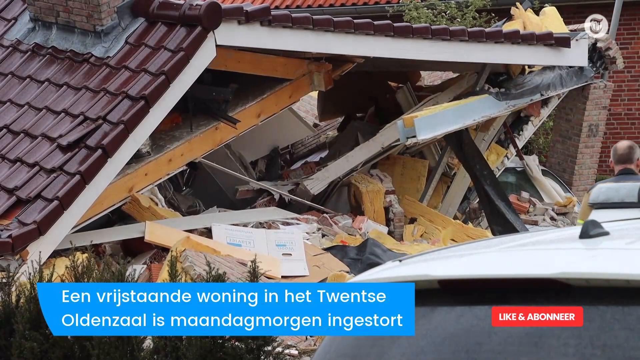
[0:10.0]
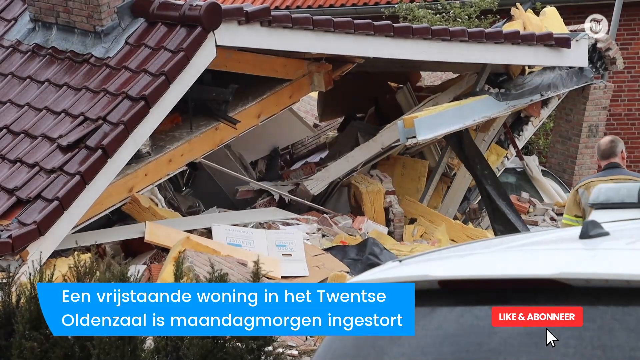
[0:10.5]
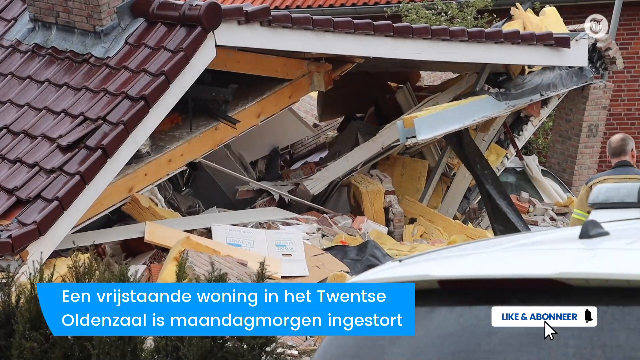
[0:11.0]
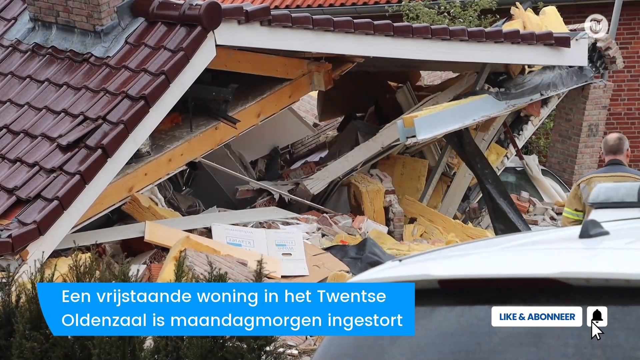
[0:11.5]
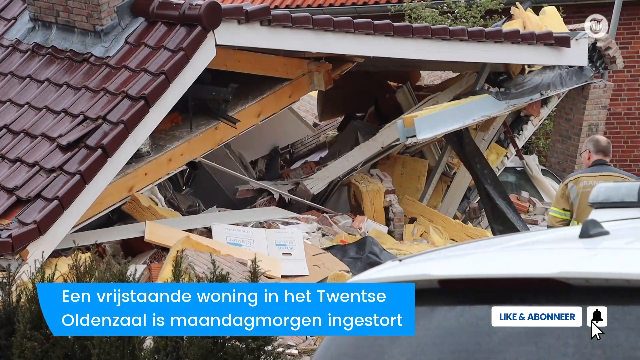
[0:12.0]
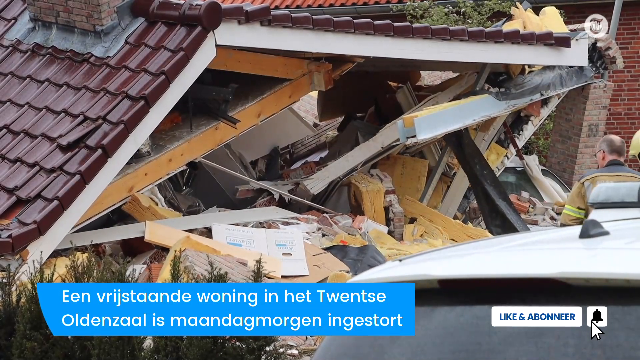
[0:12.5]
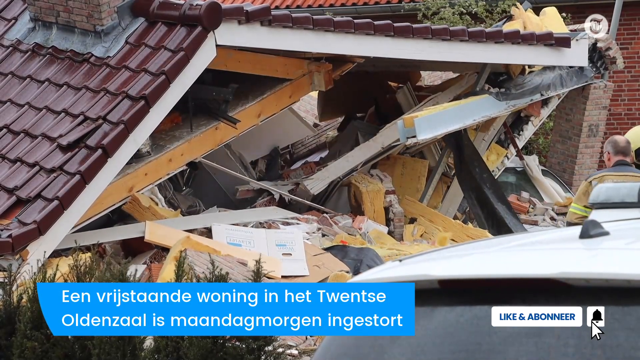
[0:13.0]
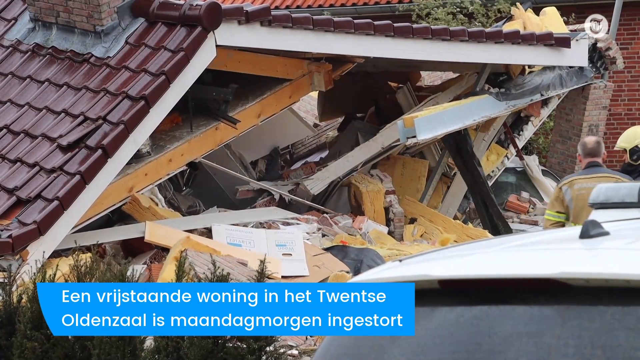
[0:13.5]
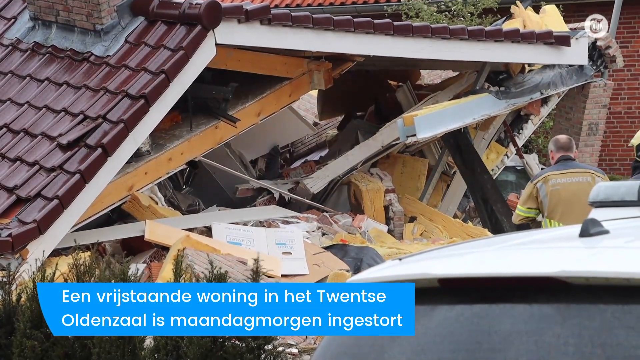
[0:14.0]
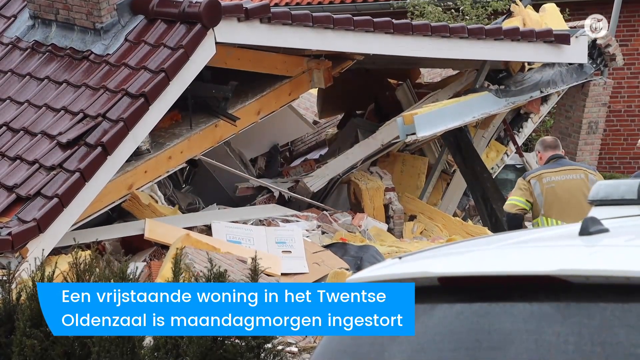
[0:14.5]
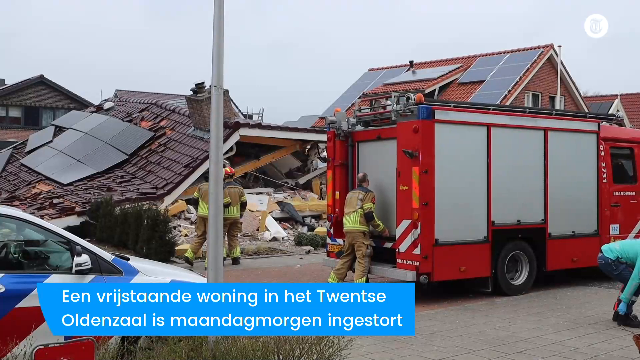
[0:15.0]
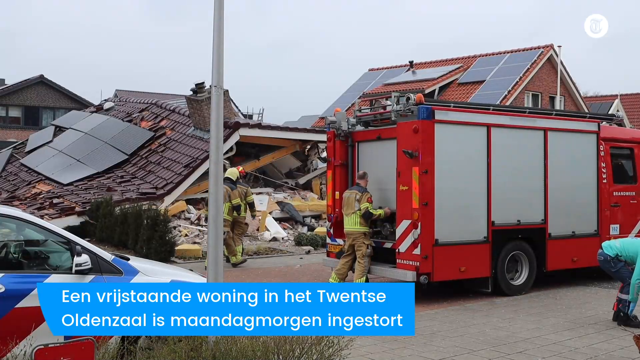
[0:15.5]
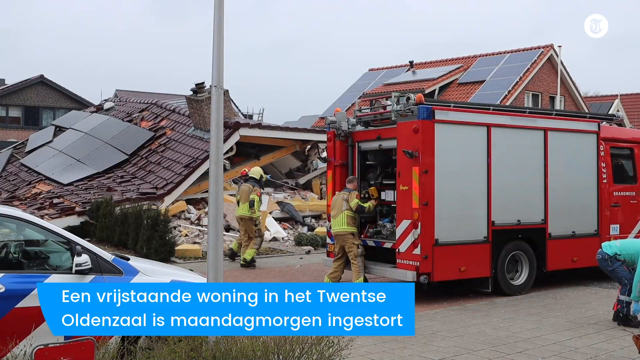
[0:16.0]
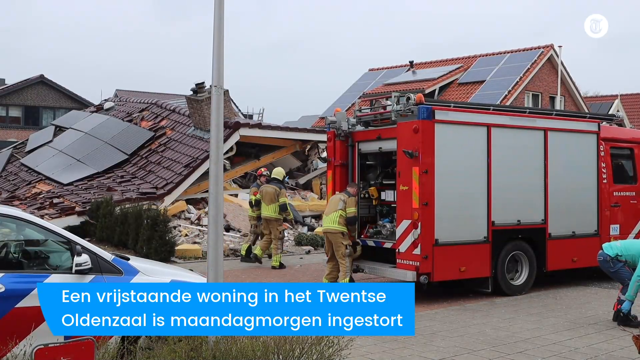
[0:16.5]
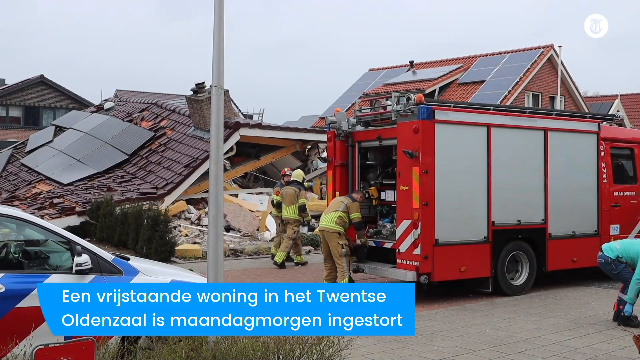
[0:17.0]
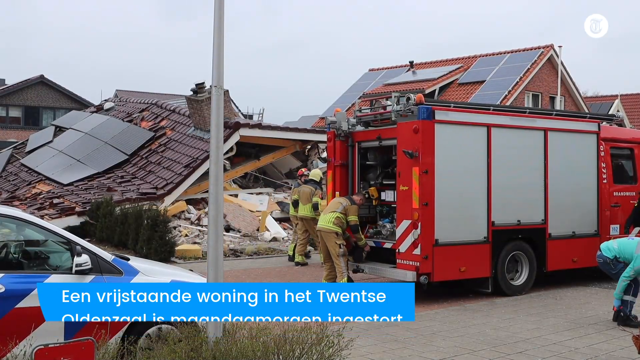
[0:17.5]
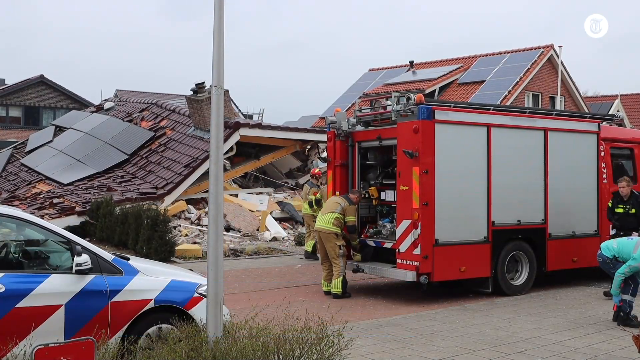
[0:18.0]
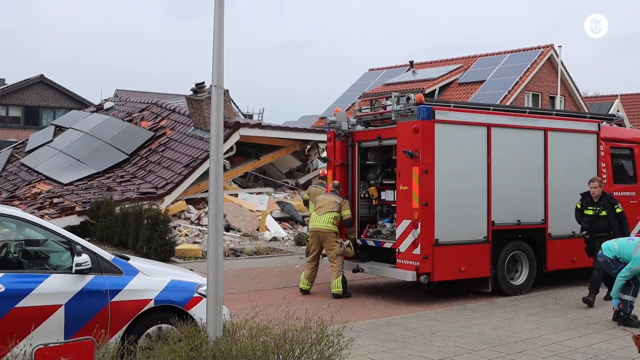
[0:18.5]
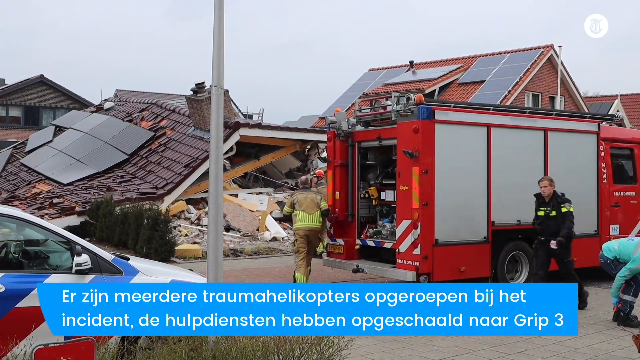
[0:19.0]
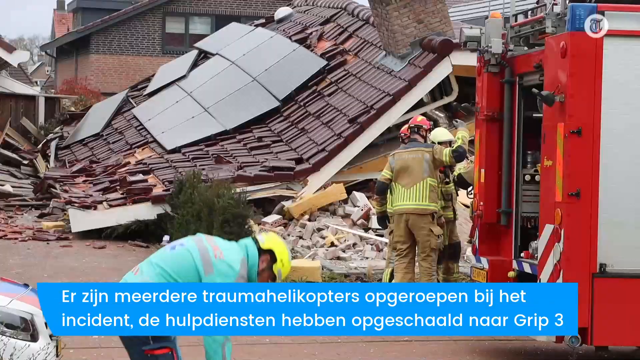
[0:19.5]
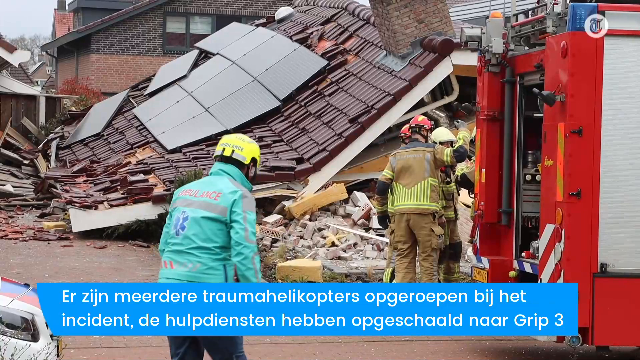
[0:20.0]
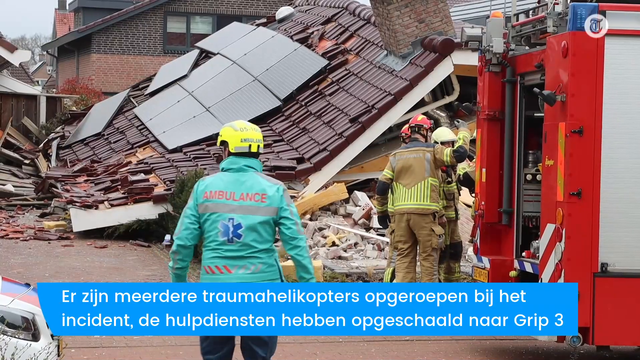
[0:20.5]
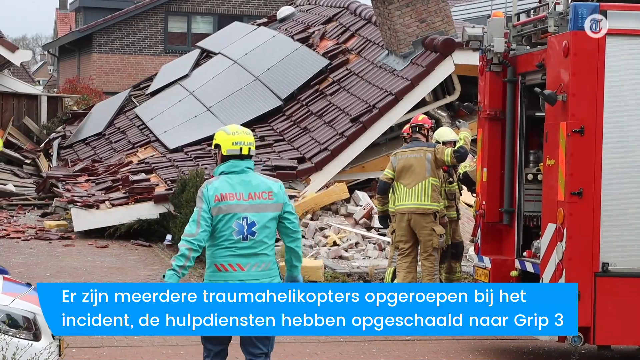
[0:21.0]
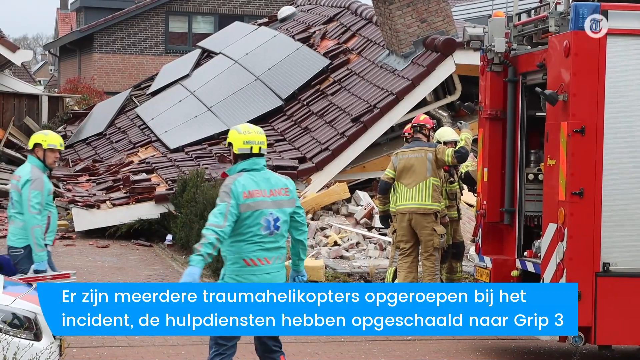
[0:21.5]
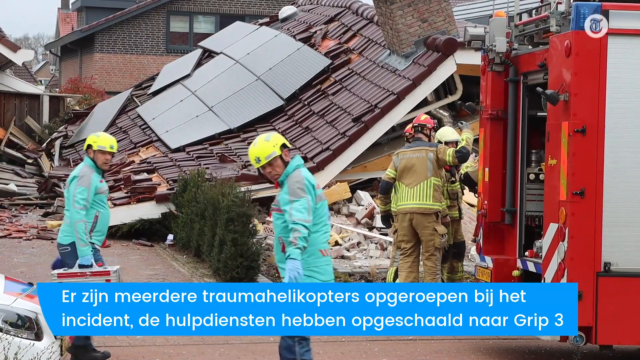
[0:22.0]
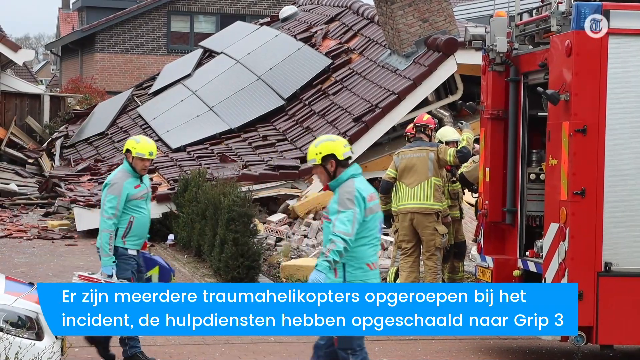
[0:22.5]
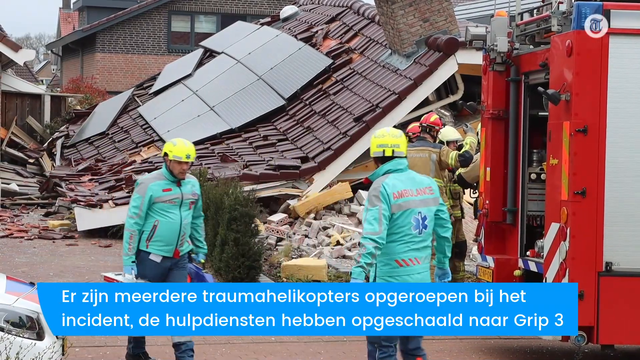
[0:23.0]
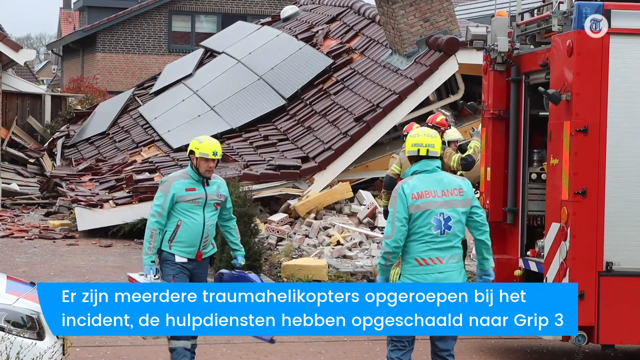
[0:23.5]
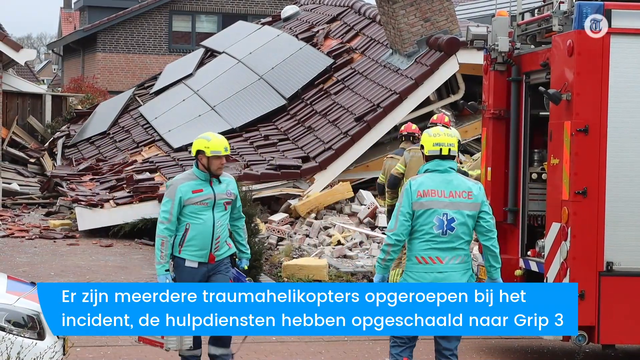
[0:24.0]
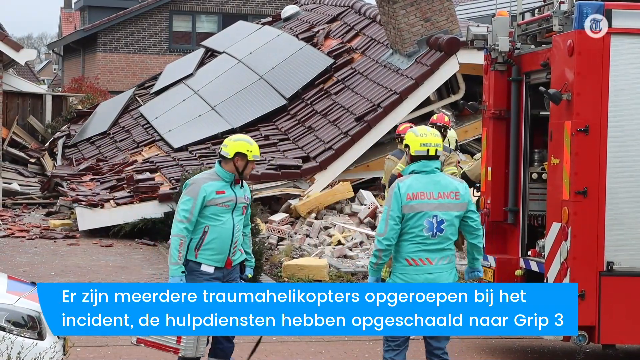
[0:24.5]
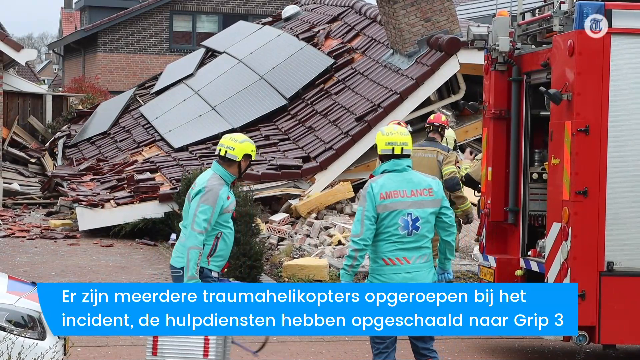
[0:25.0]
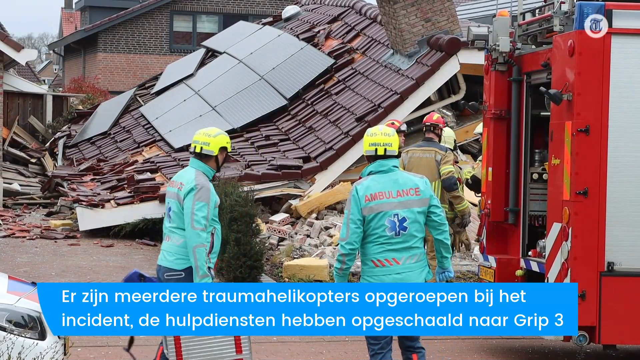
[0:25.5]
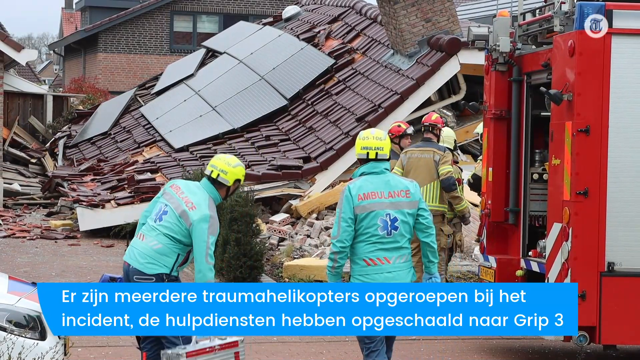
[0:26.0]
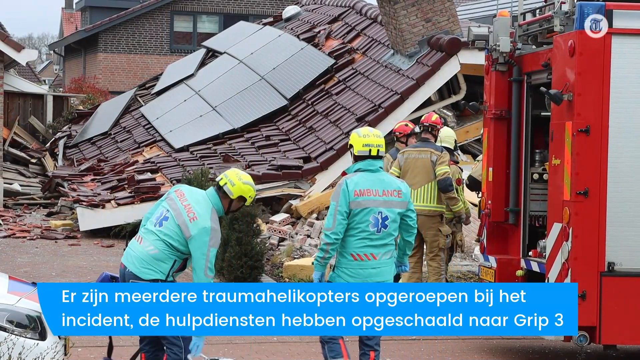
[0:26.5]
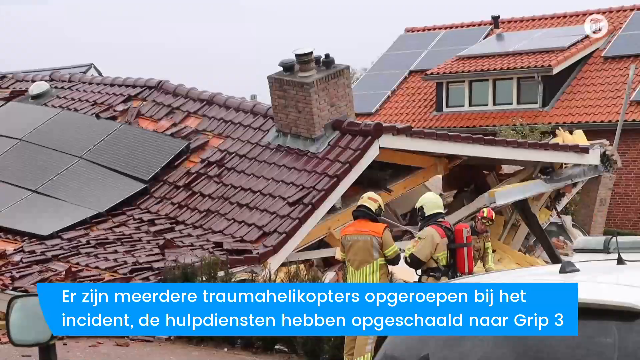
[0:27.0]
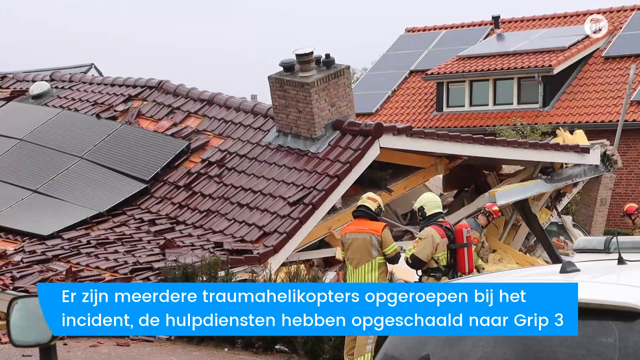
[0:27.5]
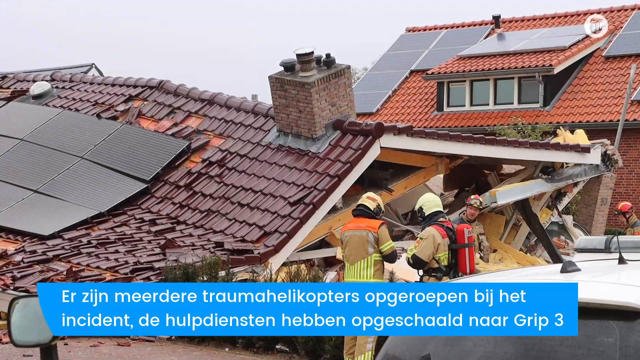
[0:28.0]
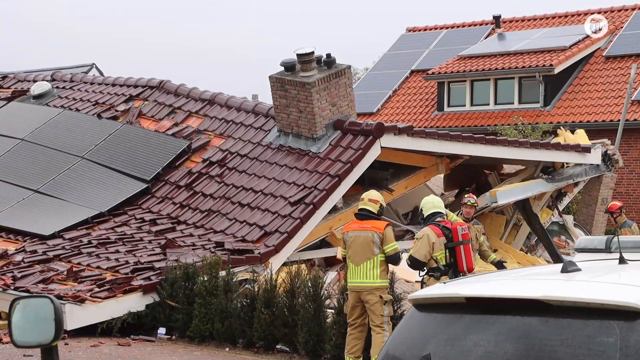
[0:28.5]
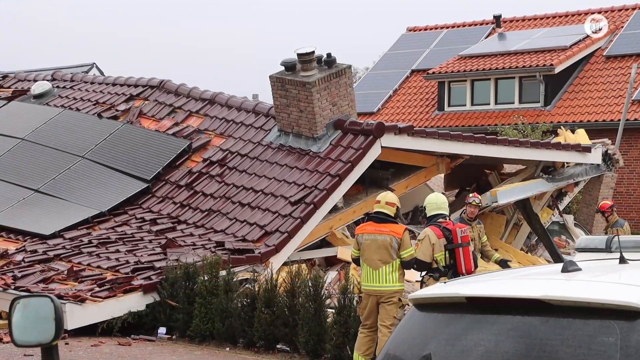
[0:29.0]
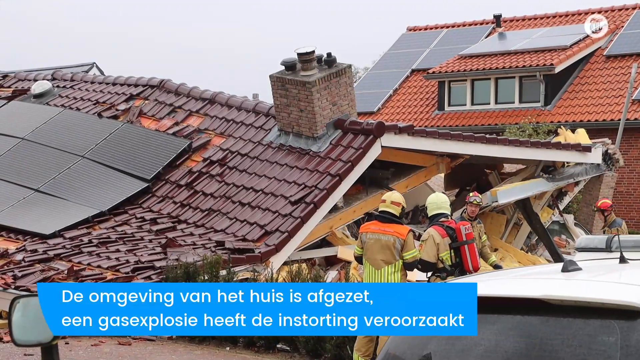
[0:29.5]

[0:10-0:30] The news story about a demolished house opens with a close-up of the house, where what looks like a brown shingled roof is pretty much laying on the ground on top of a bed of debris left over from the demolished house. The nearby houses to the left and right of it aren't damaged. Some emergency professionals, such as a couple of firemen, are observing the area. An emergency vehicle then arrives with more firemen, who gather and assess the situation. A few paramedic workers are on standby. The firemen seem to be having some type of discussion about how to go into the remains of the torn-down house, maybe to rescue someone or move something.